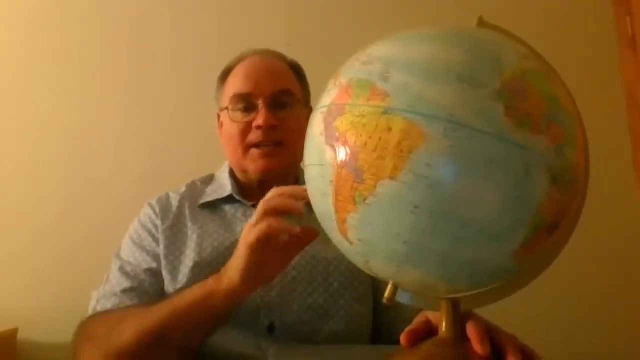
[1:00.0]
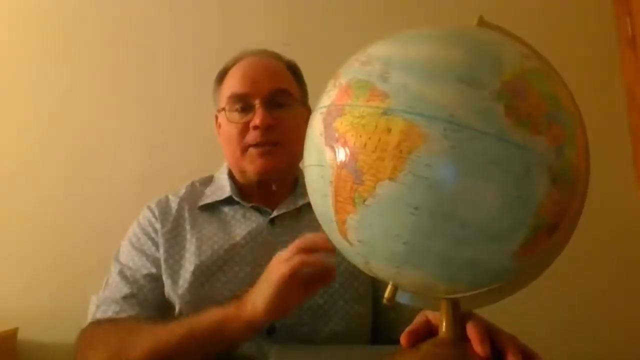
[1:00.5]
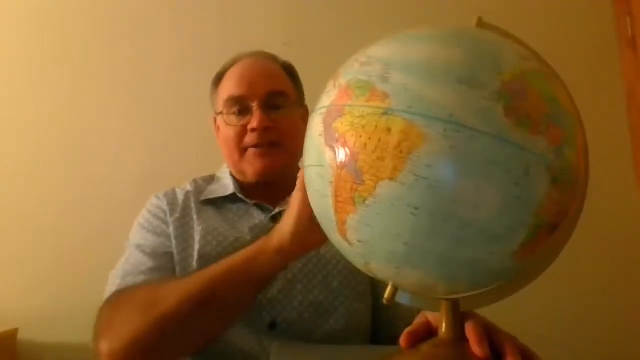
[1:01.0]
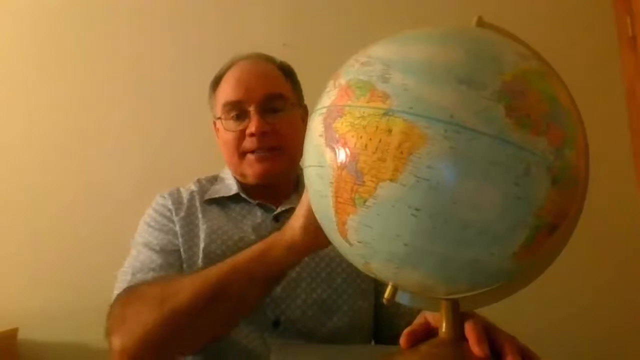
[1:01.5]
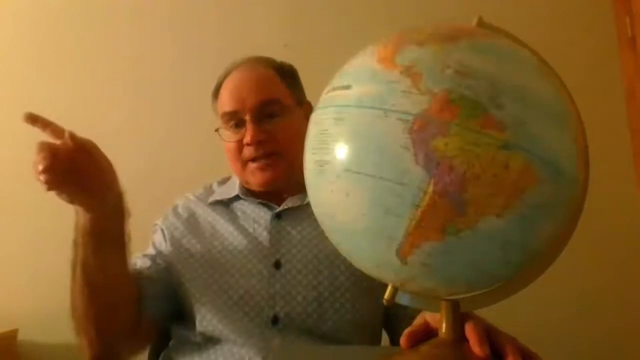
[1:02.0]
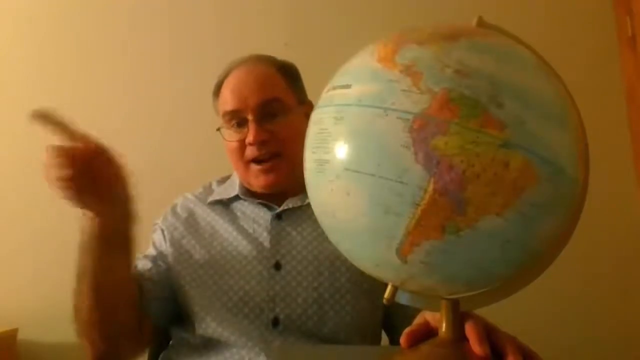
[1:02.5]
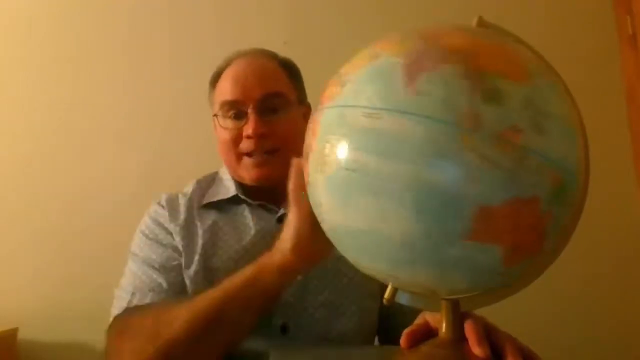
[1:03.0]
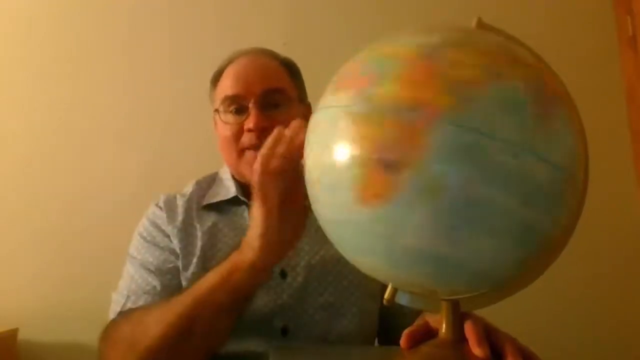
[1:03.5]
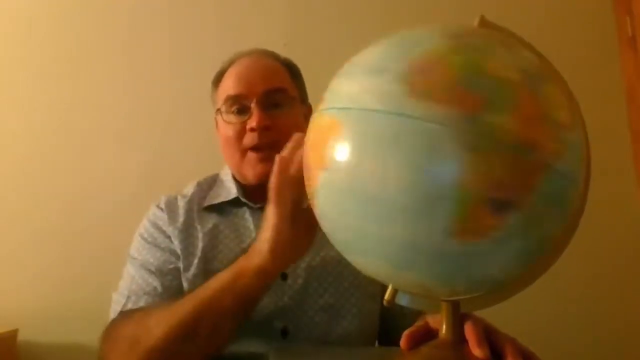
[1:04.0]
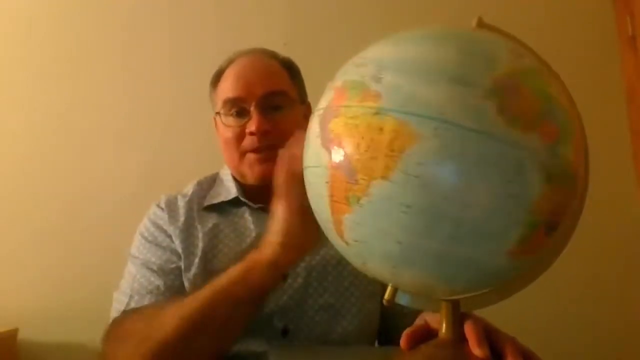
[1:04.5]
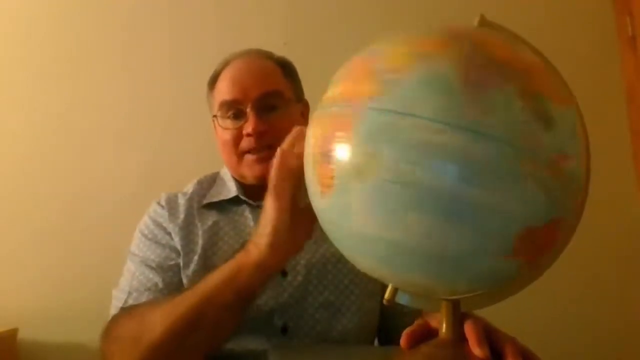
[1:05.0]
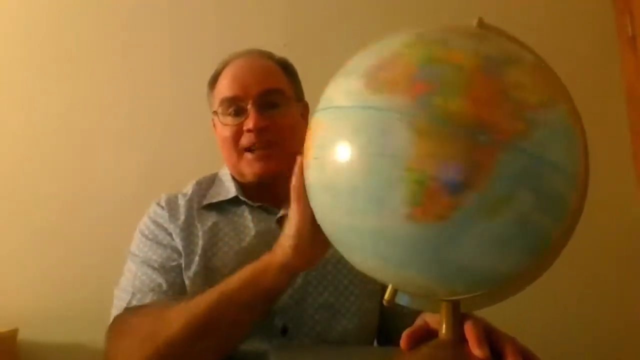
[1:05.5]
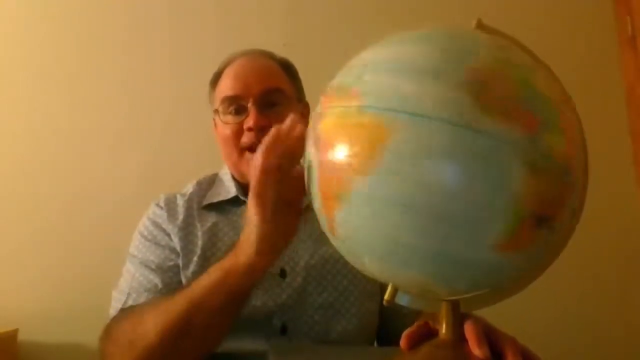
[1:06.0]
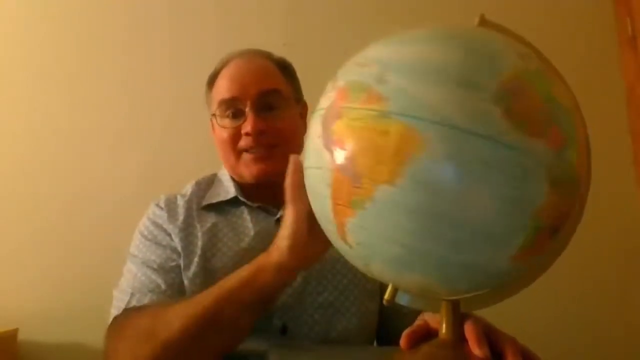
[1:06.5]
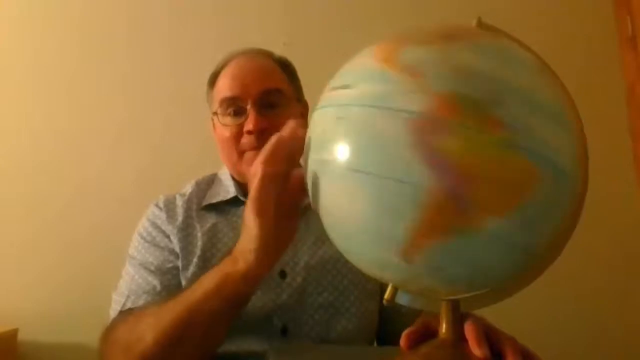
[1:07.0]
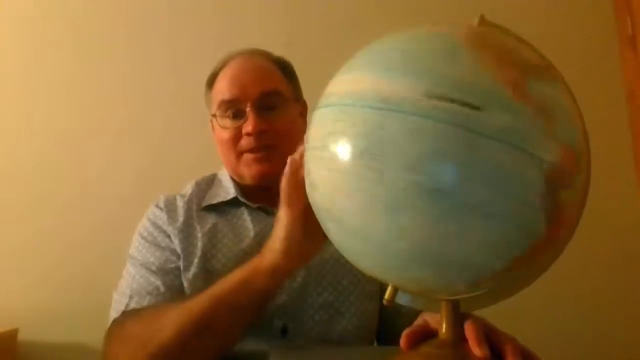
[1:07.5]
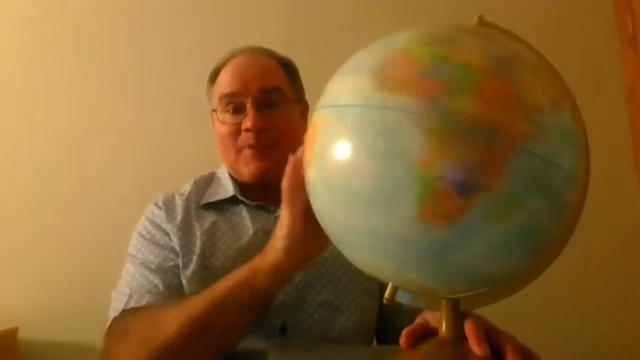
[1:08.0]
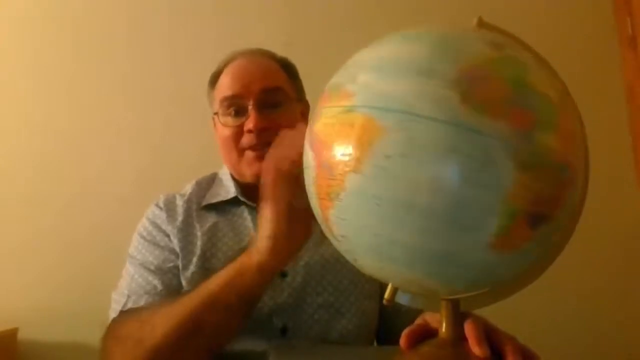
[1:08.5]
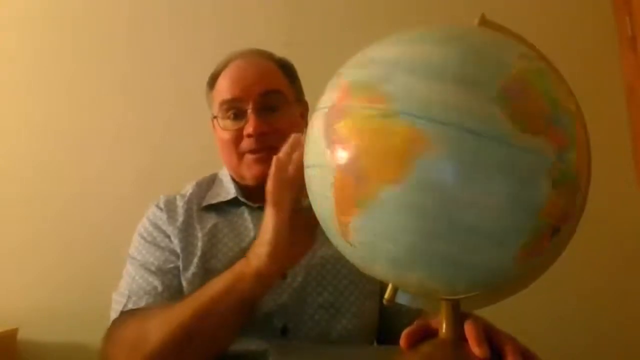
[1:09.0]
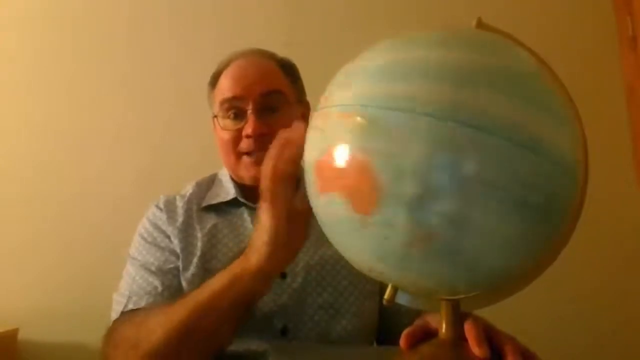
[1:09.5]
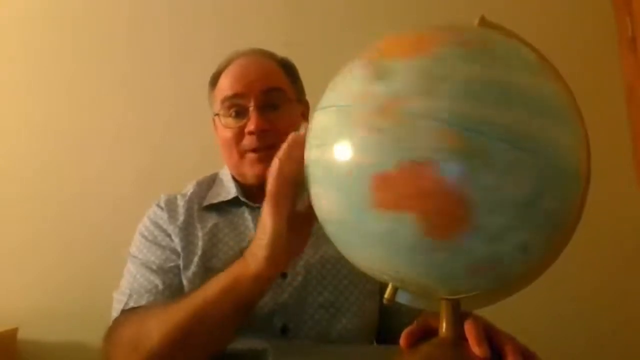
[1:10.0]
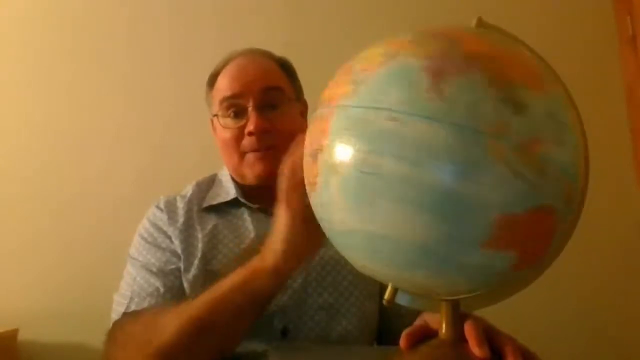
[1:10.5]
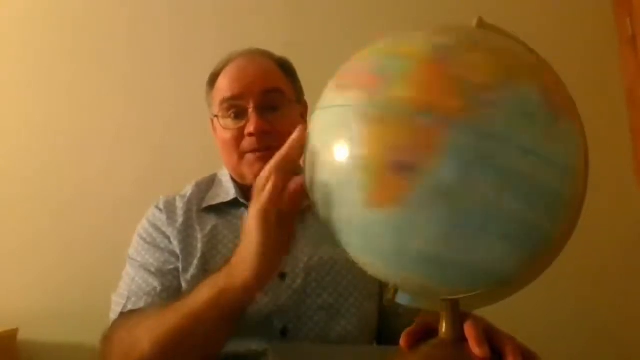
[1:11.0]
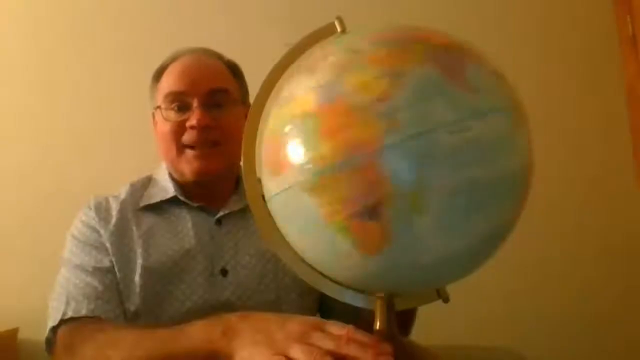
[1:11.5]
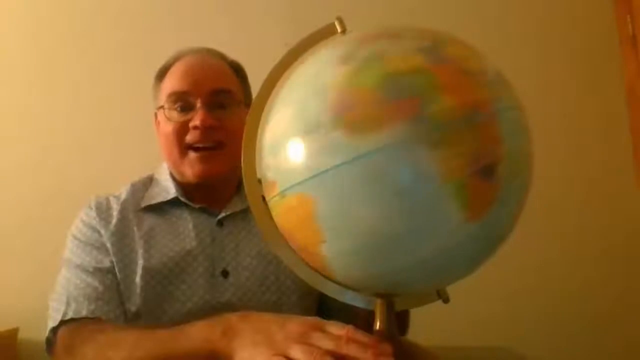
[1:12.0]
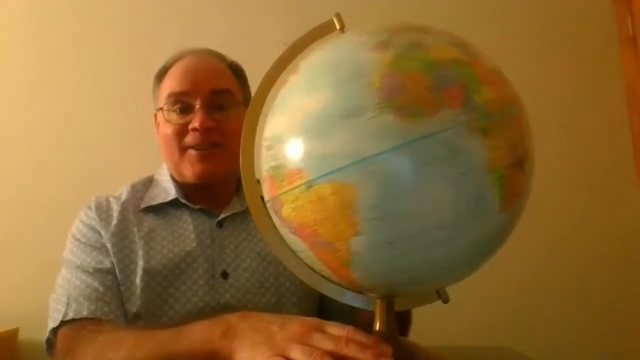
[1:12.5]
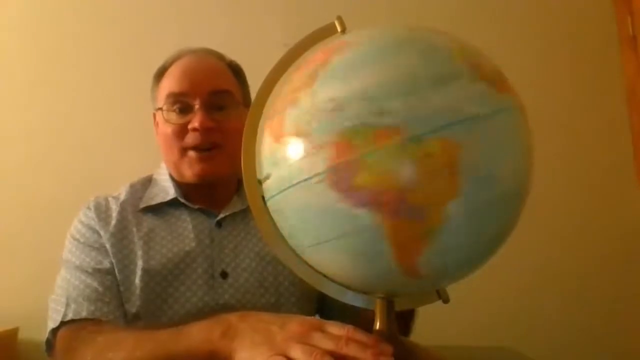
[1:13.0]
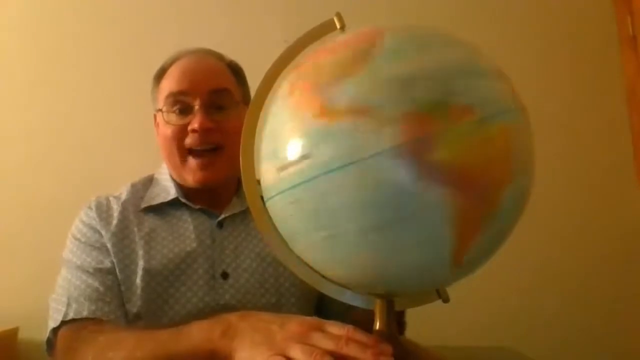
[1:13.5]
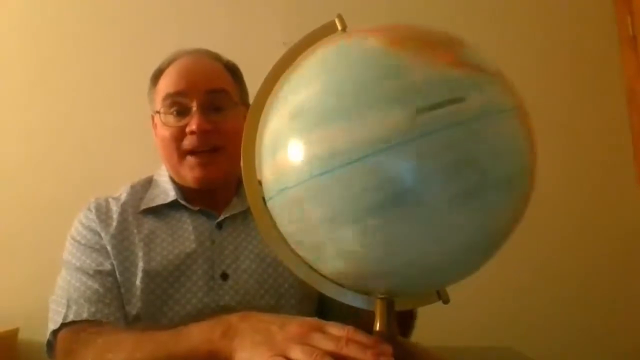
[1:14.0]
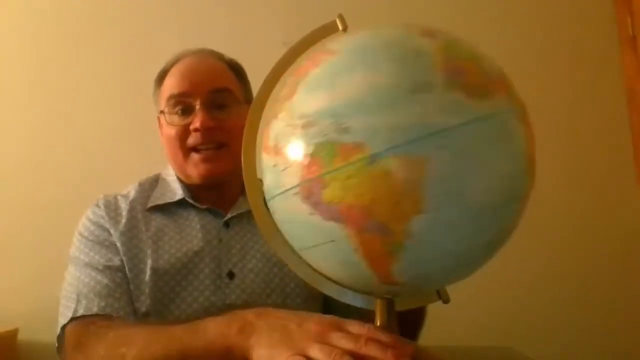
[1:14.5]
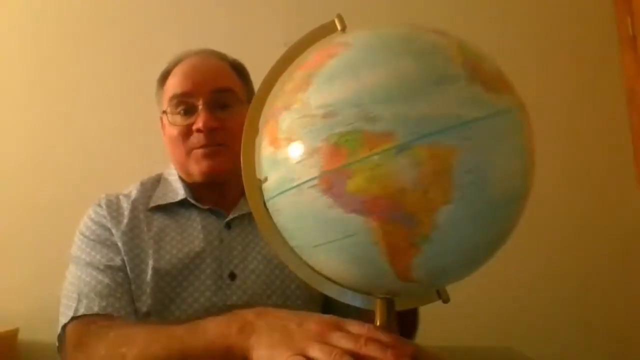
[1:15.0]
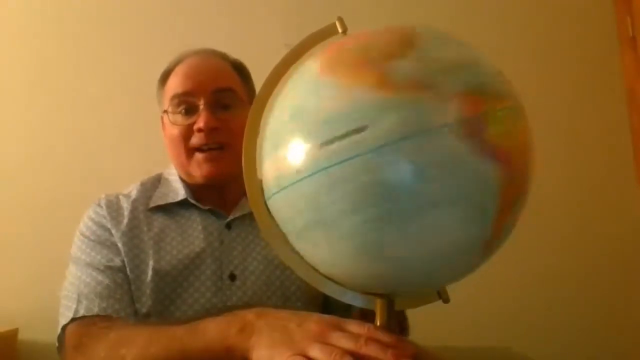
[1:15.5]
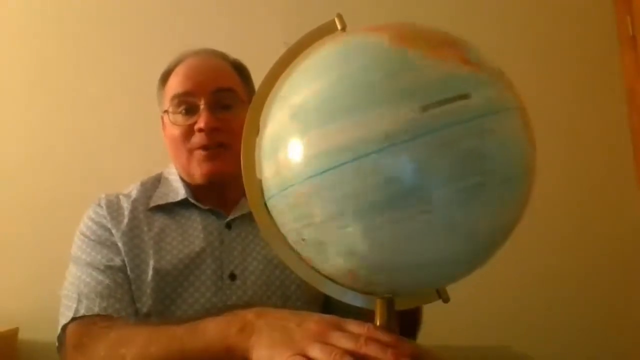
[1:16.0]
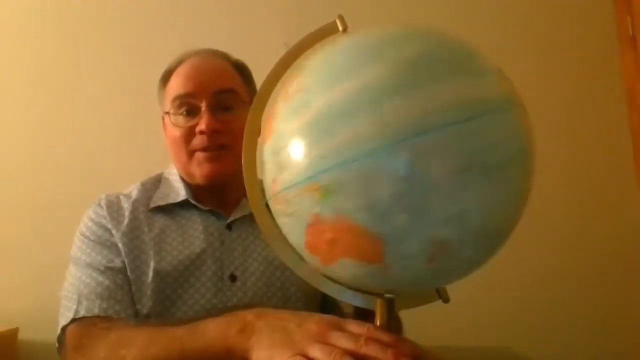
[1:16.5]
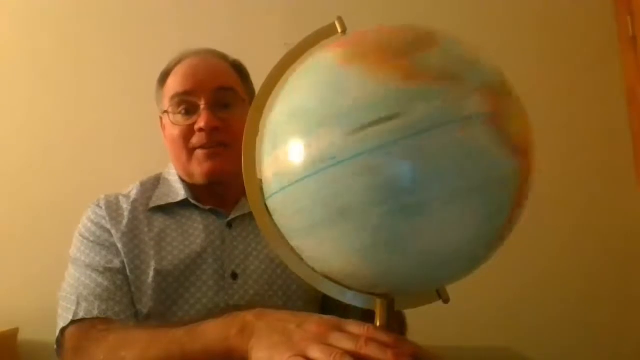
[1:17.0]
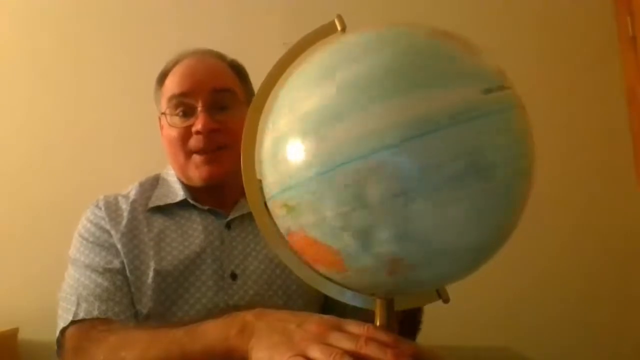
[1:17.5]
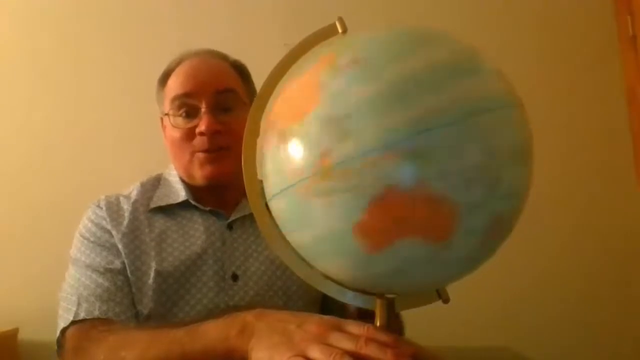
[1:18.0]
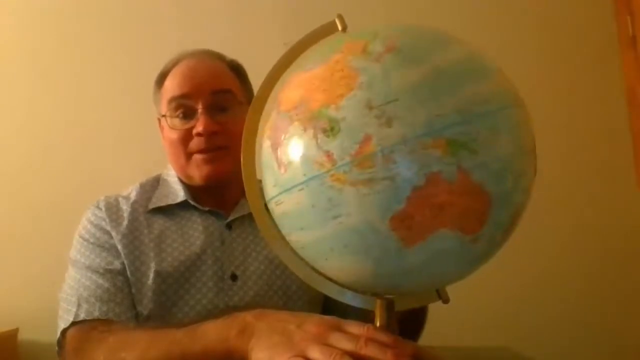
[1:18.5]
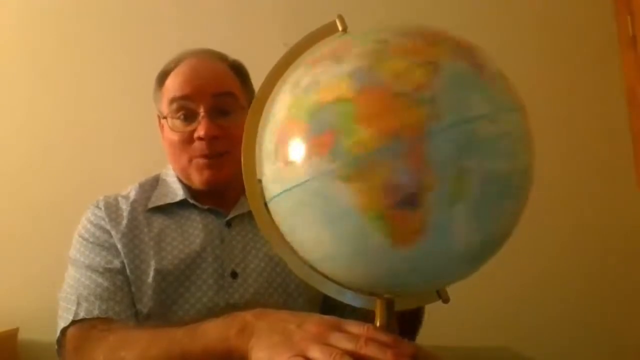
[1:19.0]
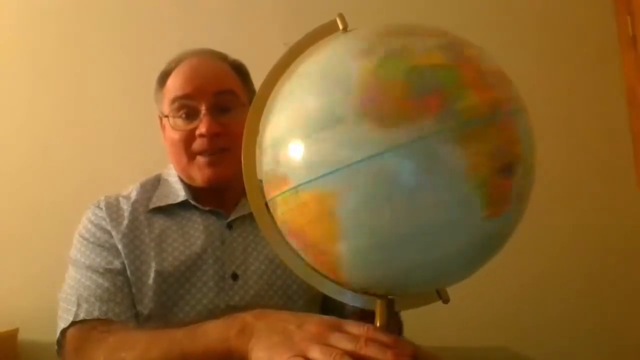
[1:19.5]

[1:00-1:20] The large globe is sitting on top of the desk to John's left. John speaks to the audience looking straight ahead into the camera, and touches the fingertips of his left hand to the globe as he continues to speak. He glides his fingers down the globe towards its lower portion, then raises his arm and points his index finger to his right, away from the globe, while still looking straight at the camera without losing eye contact. He brings his arm back over to the globe, places his fingertips back on it, and starts to spin the globe with his fingertips as he speaks. He keeps looking straight ahead at the audience while the globe is still spinning.